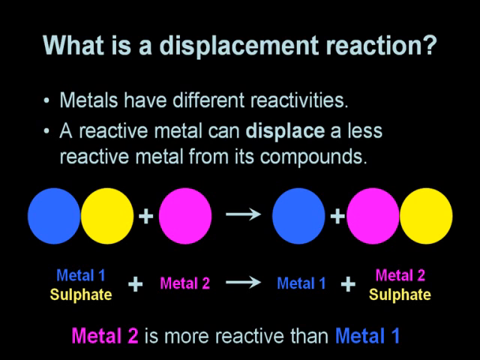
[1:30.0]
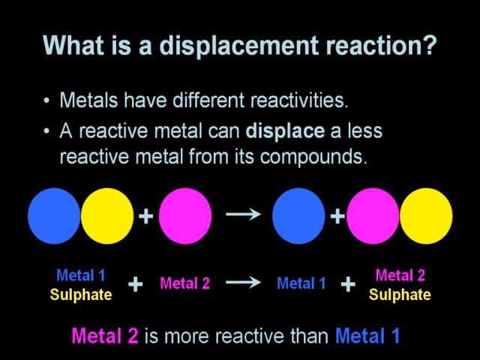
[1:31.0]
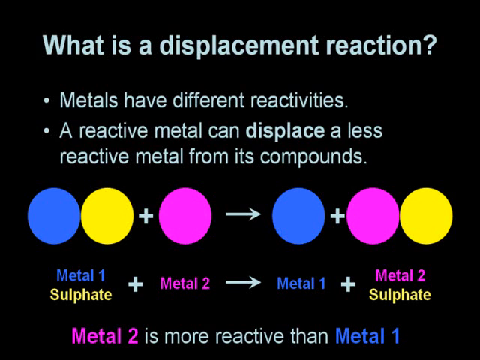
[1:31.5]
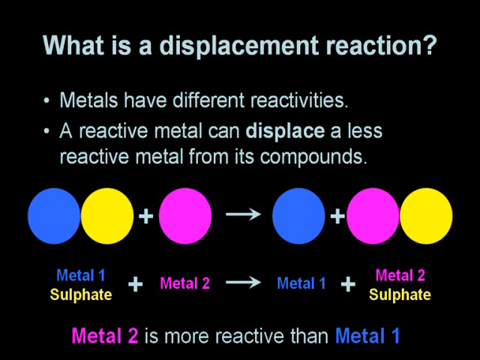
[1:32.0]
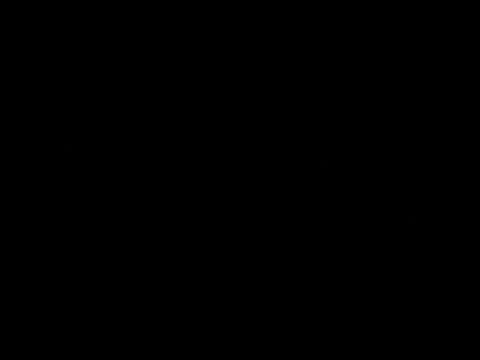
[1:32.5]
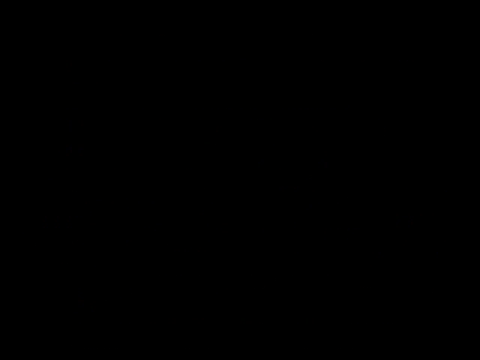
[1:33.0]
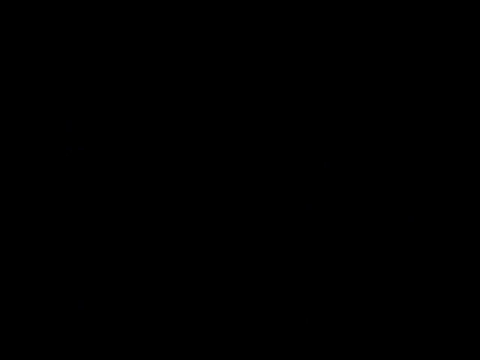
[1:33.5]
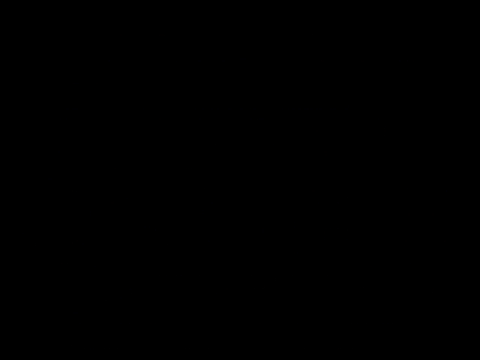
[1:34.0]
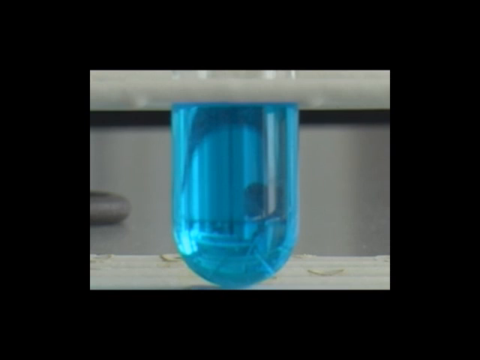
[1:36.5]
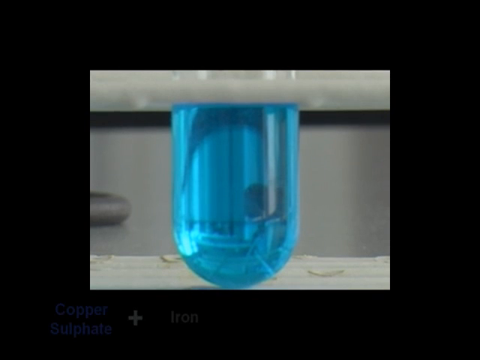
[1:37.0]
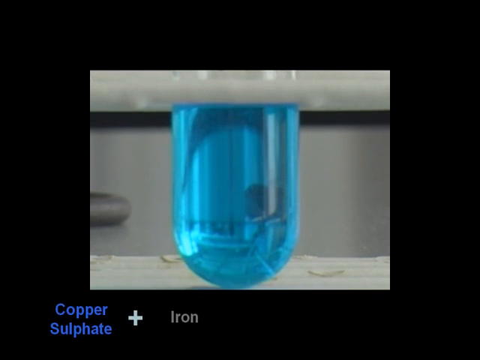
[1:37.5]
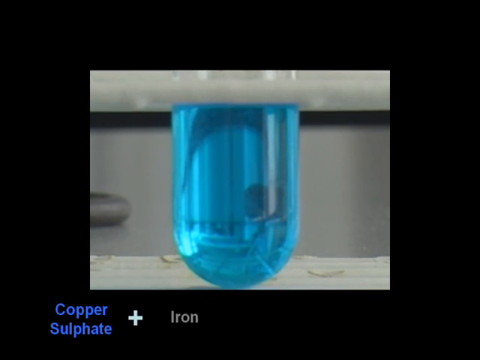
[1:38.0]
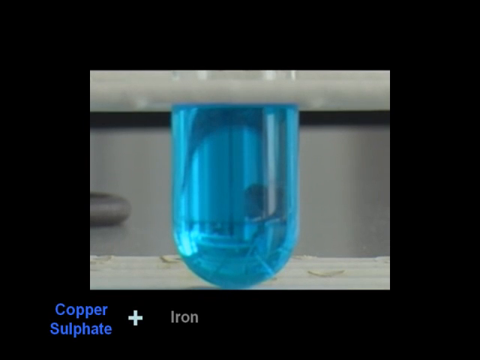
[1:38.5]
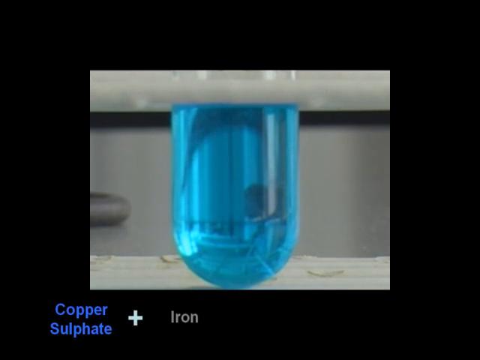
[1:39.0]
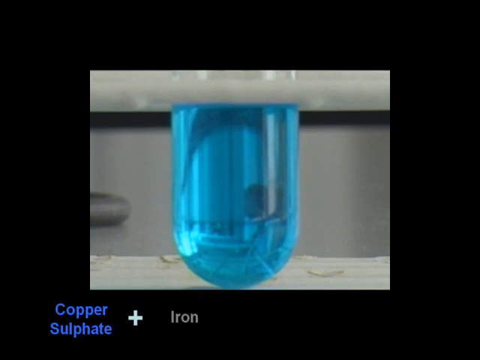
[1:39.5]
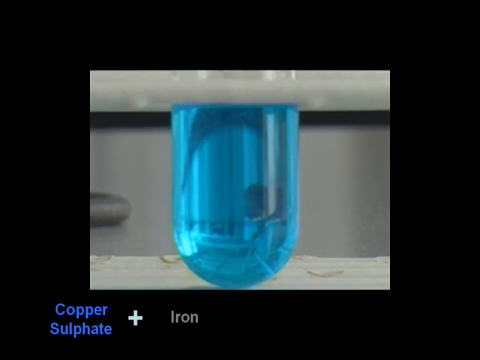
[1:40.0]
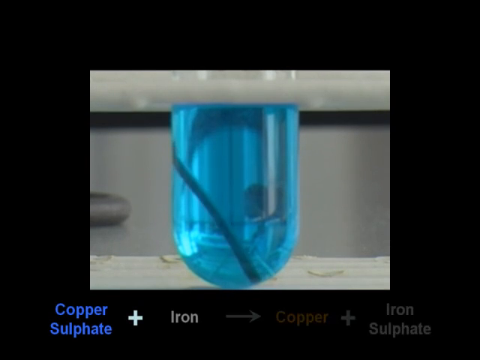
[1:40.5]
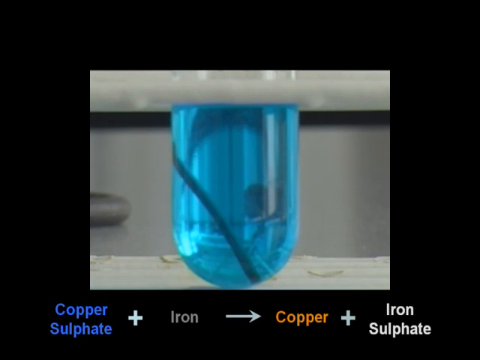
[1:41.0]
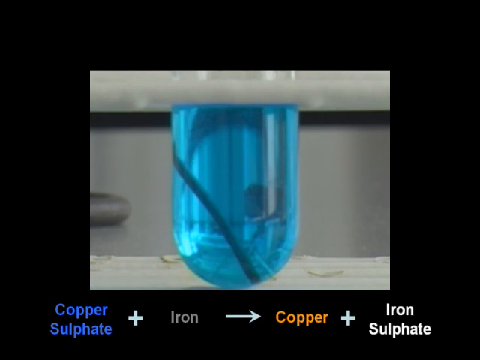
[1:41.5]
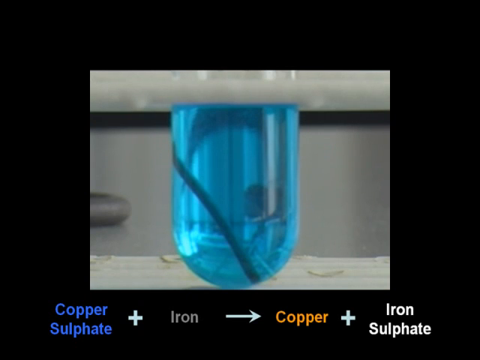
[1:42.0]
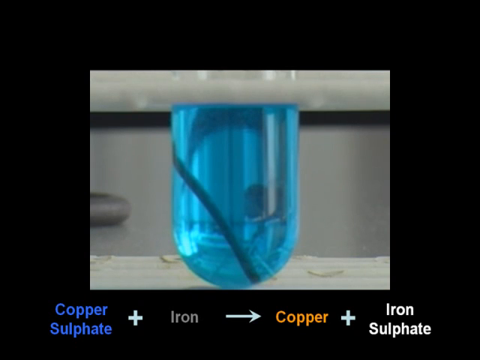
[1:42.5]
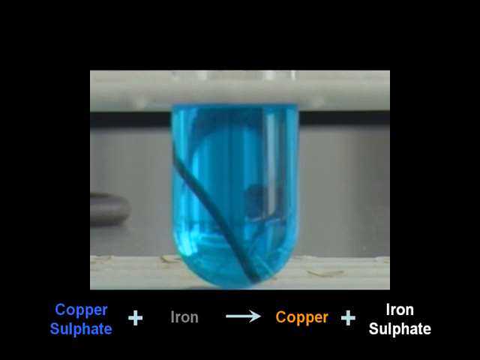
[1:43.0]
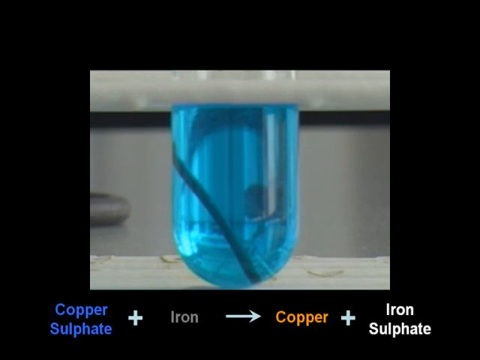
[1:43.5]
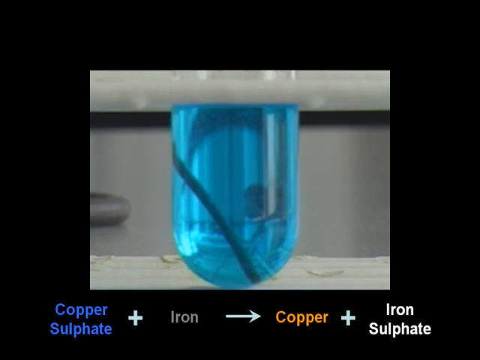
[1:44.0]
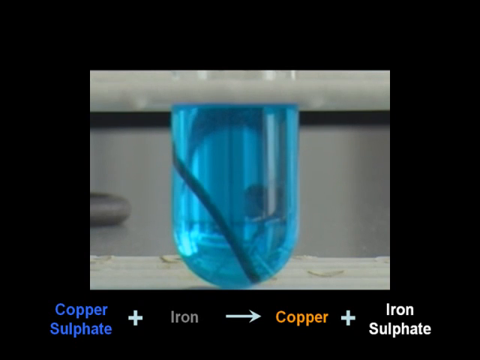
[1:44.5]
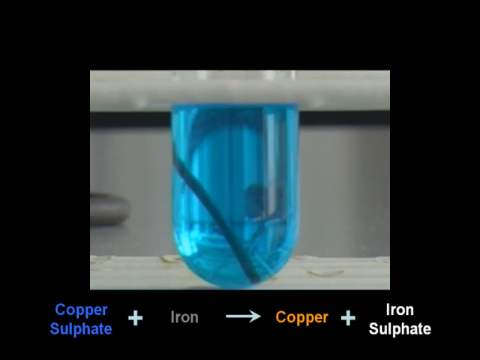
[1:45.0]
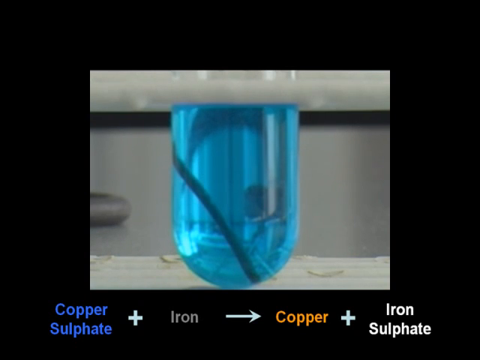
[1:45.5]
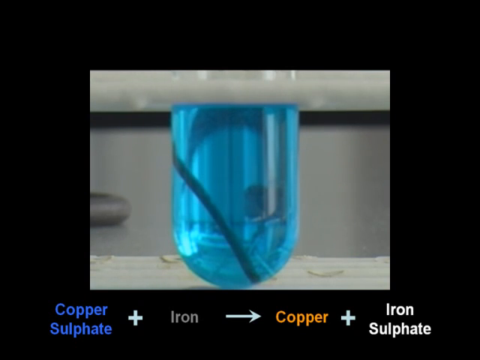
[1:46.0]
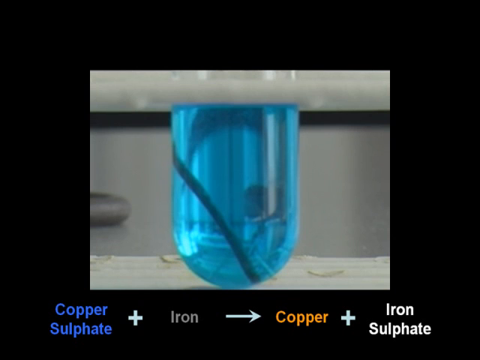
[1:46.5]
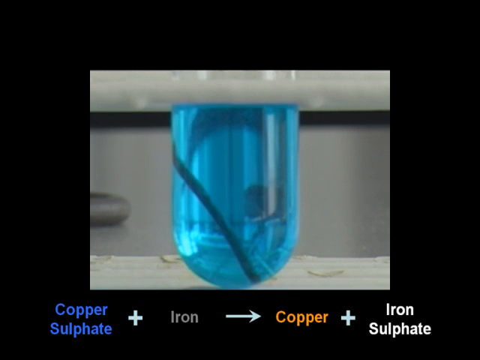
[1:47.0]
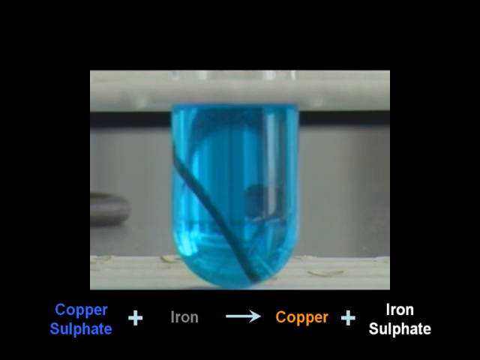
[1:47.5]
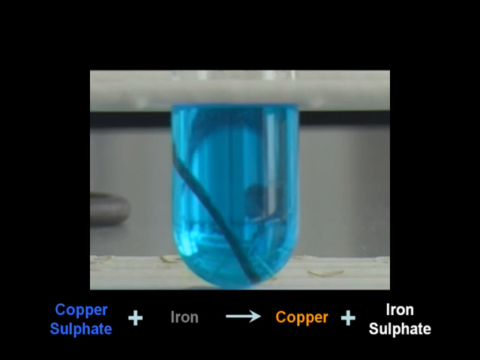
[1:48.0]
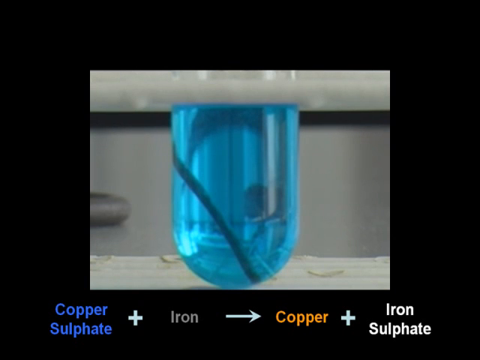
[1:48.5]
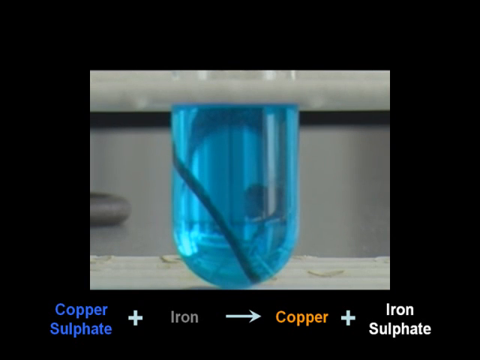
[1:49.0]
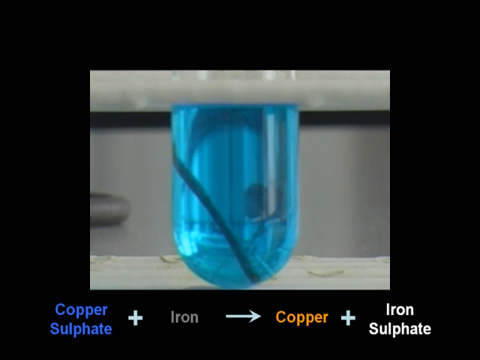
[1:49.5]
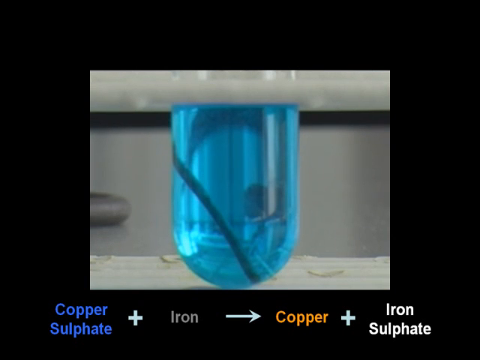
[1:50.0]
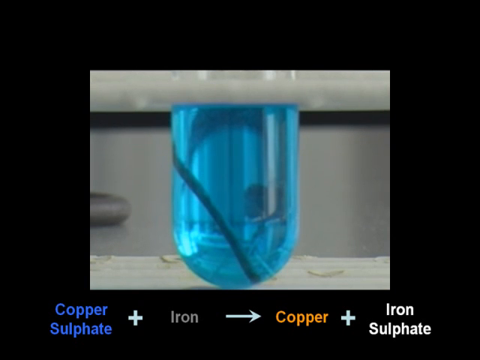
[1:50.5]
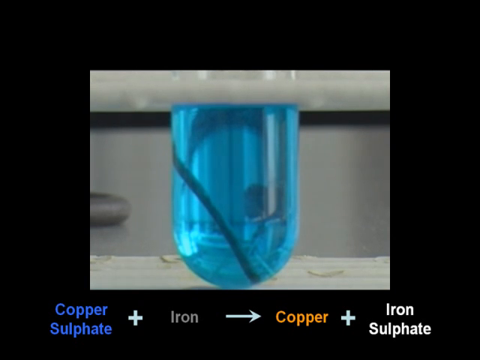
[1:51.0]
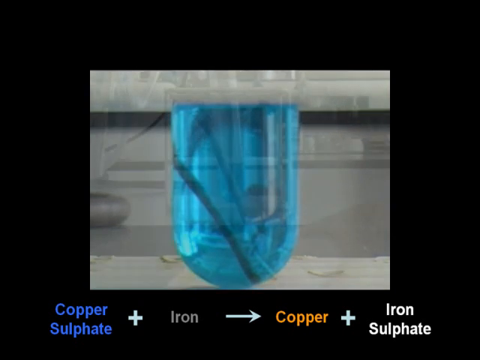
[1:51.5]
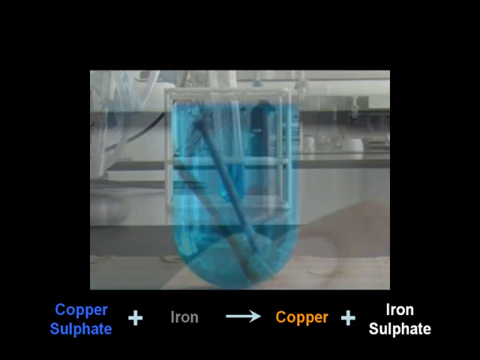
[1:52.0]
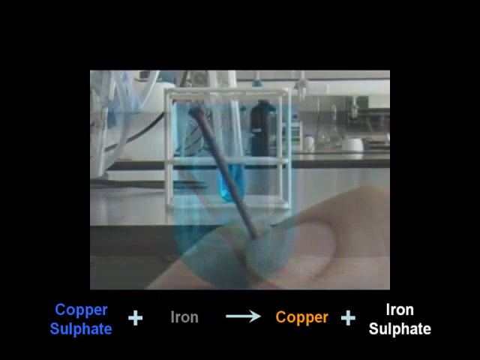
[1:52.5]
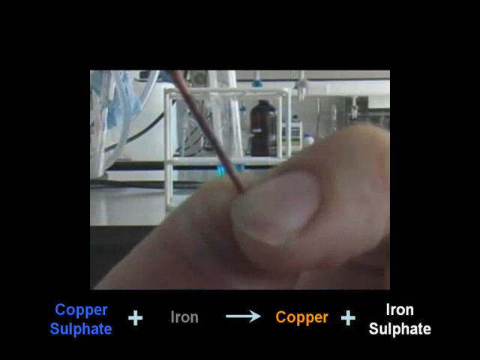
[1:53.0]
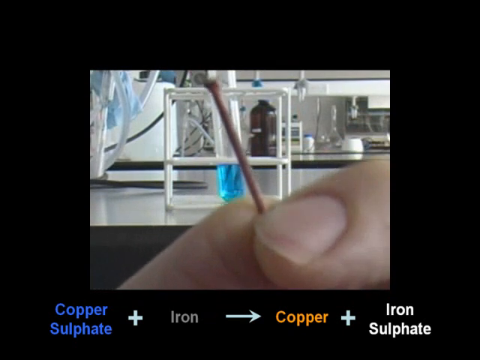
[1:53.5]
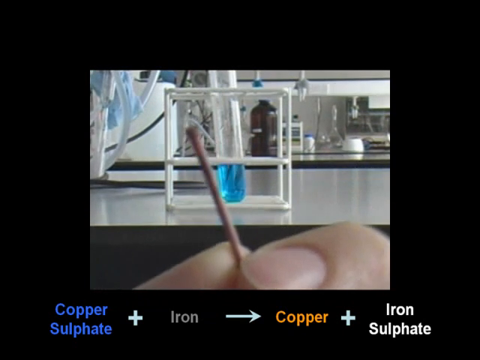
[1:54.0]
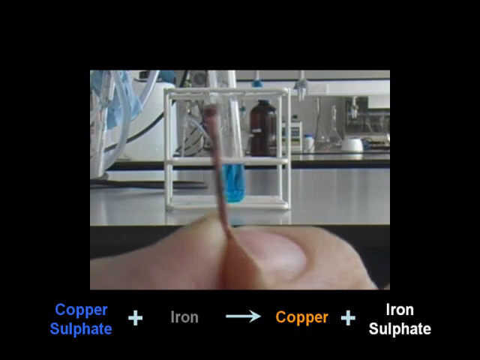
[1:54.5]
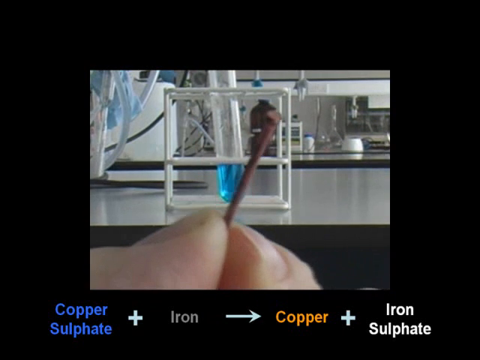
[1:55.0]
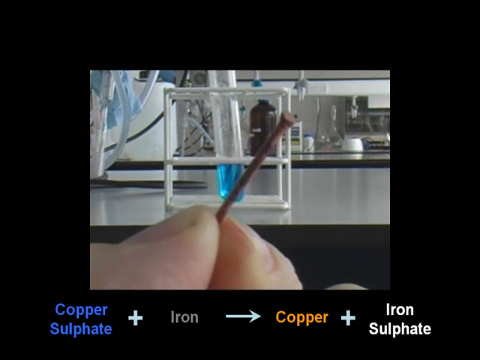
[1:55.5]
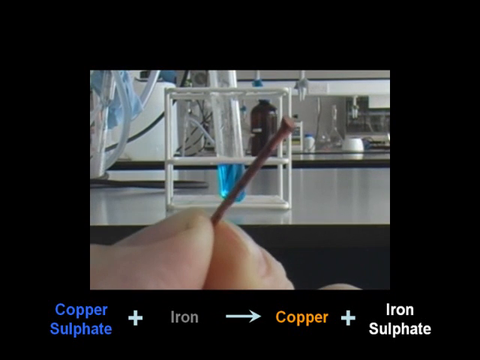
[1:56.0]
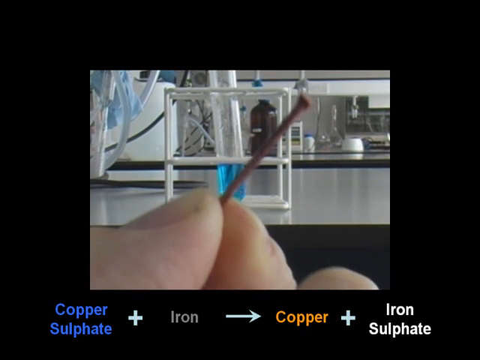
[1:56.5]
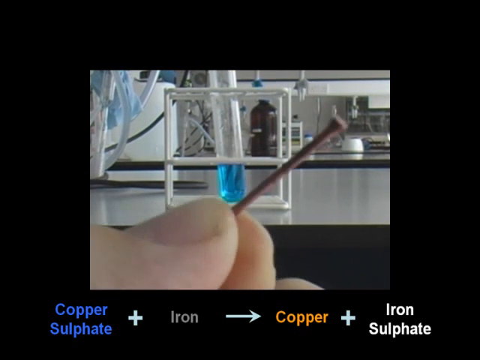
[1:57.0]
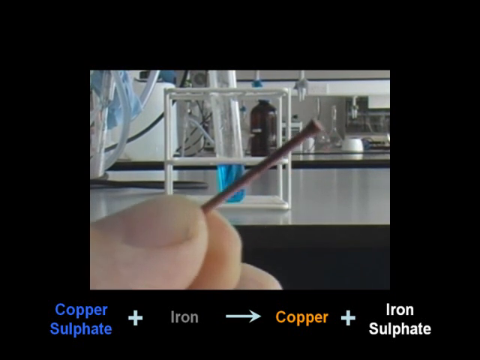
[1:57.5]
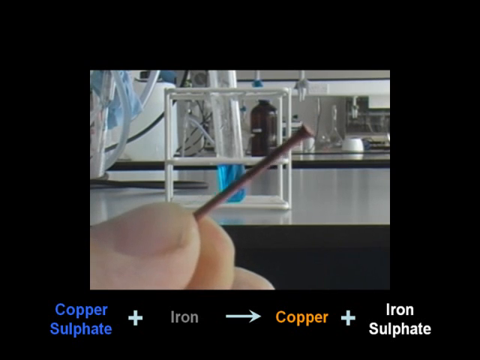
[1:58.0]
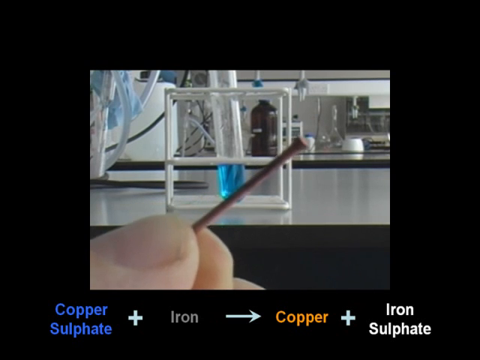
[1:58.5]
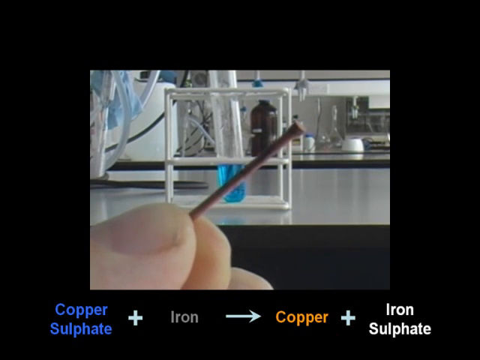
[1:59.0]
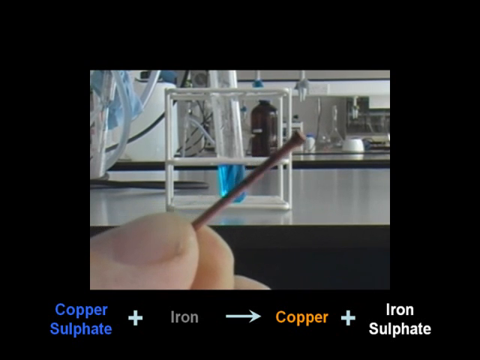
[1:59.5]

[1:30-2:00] The slide shows the diagrams of displacement reactions, then quickly goes to an all-black screen, and the testing tube with the blue liquid pops back up in a close-up. Someone appears to drop something into it that looks like it could be the nail or some other stick-like object; it goes all the way down to the bottom and sits there. Then the nail is held up close in the person's hand, with just their thumb and middle finger visible holding it. The nail looks a little rusty. They move it around to show all of its sides; it is possibly the object that was placed in the bottle with the blue liquid.